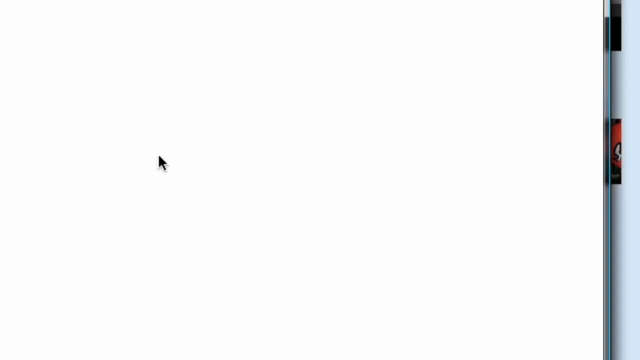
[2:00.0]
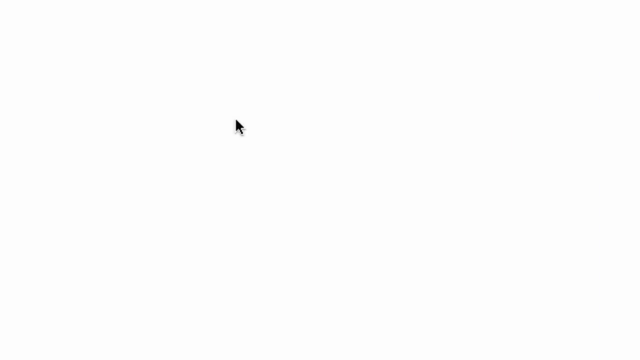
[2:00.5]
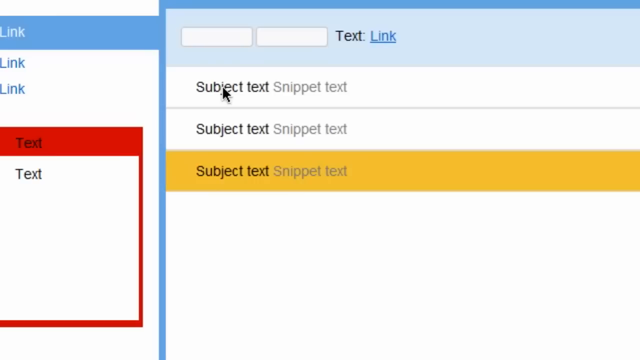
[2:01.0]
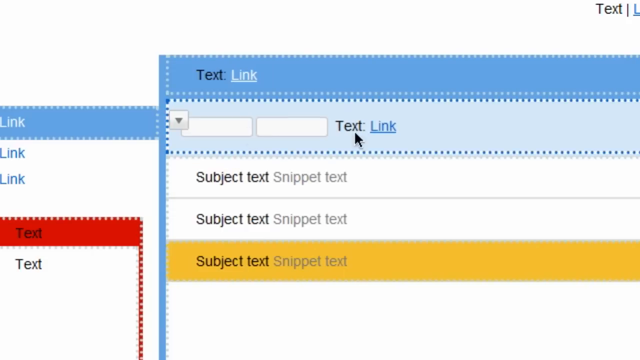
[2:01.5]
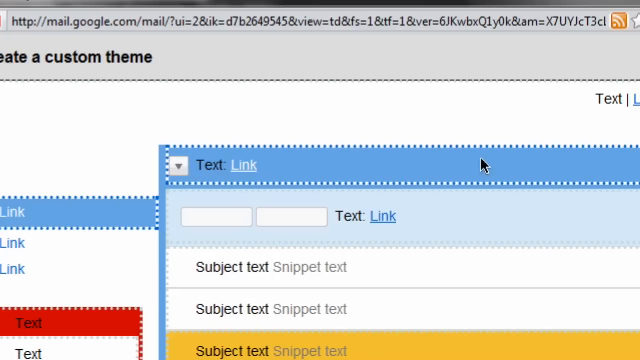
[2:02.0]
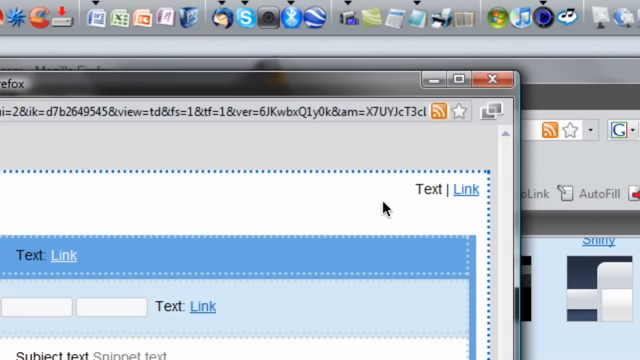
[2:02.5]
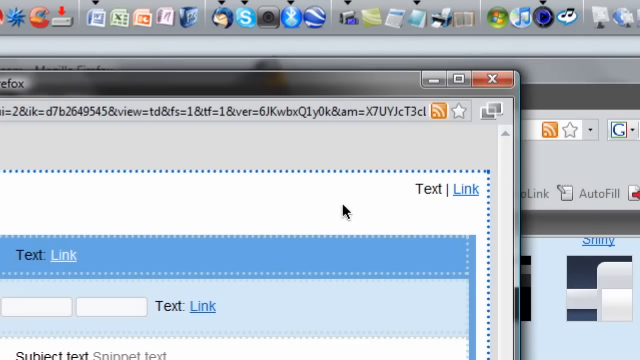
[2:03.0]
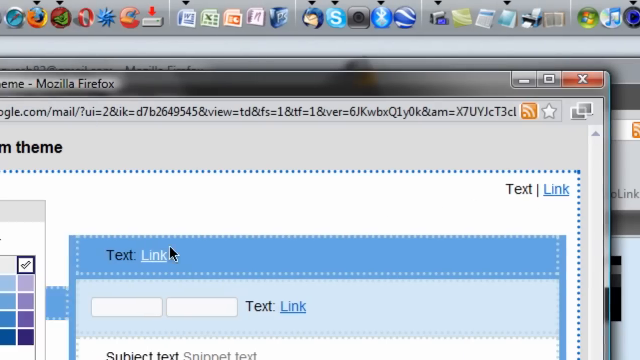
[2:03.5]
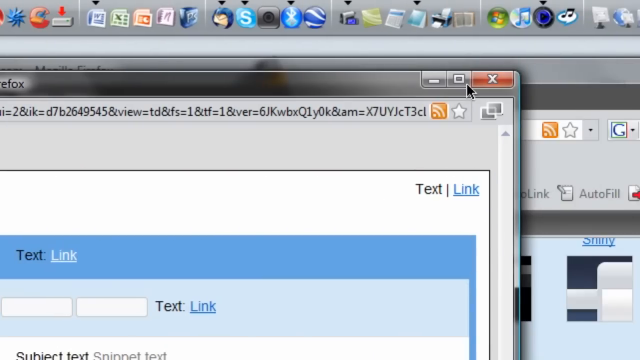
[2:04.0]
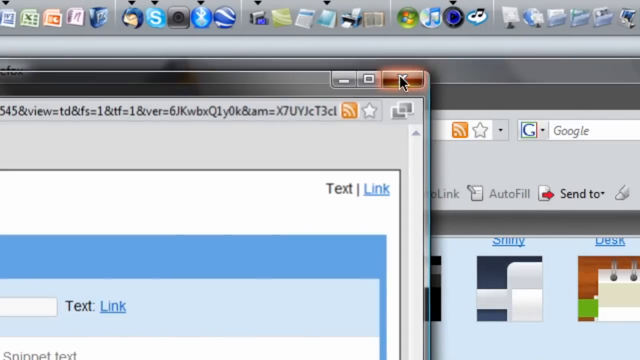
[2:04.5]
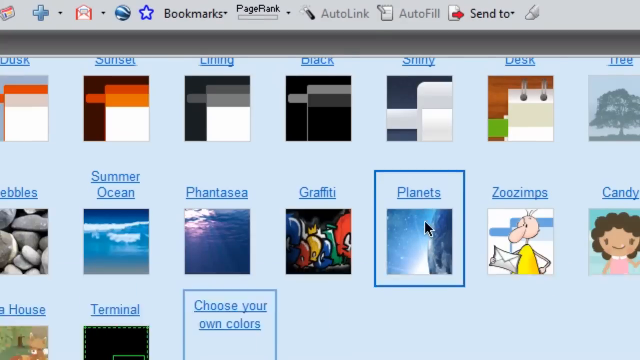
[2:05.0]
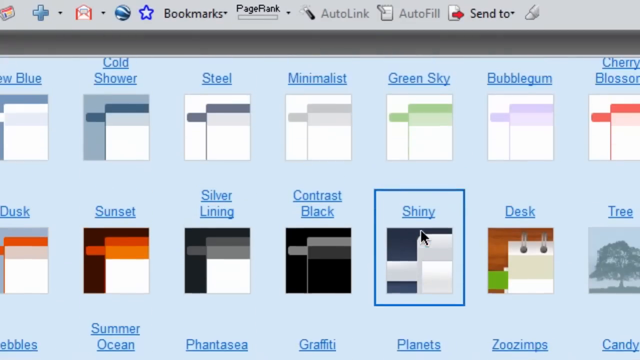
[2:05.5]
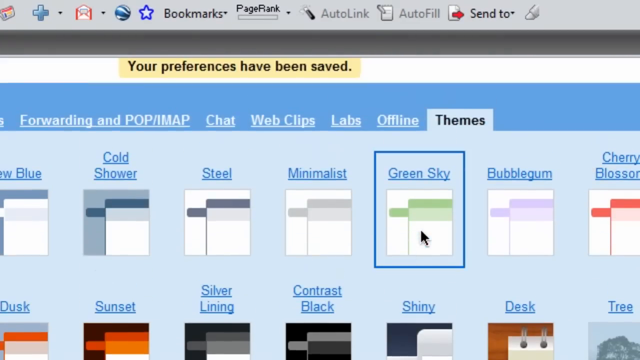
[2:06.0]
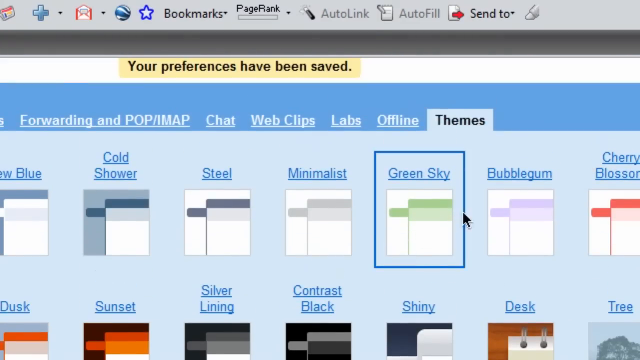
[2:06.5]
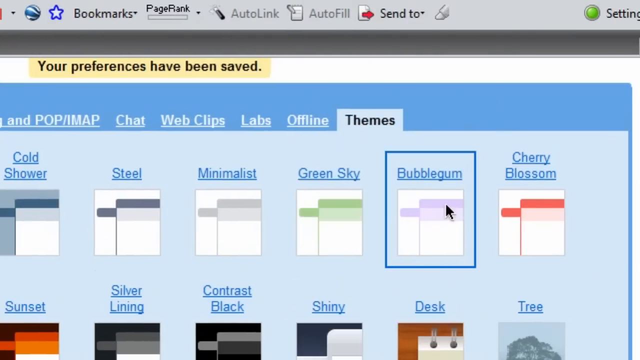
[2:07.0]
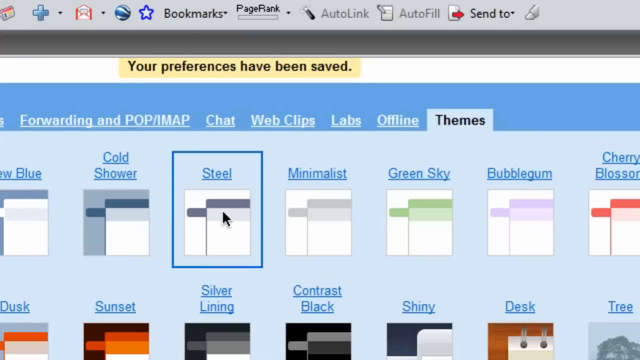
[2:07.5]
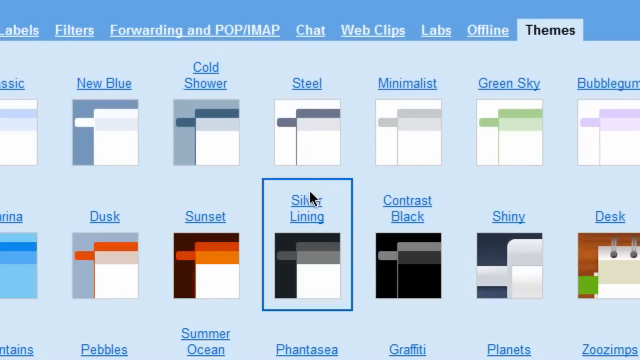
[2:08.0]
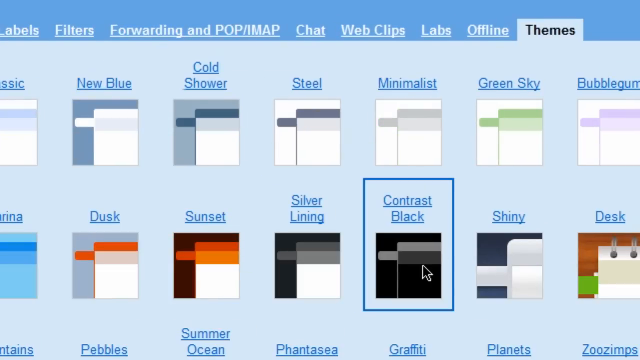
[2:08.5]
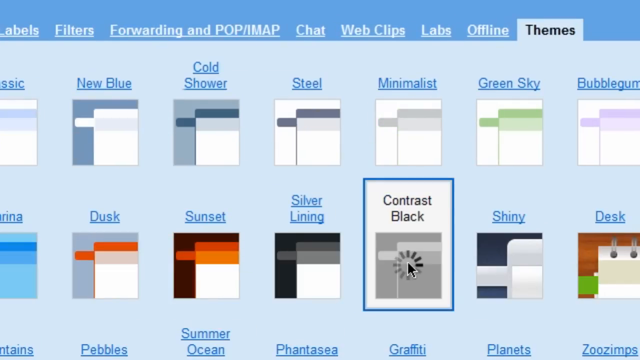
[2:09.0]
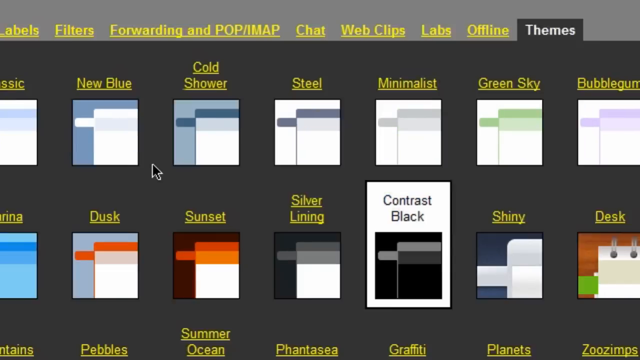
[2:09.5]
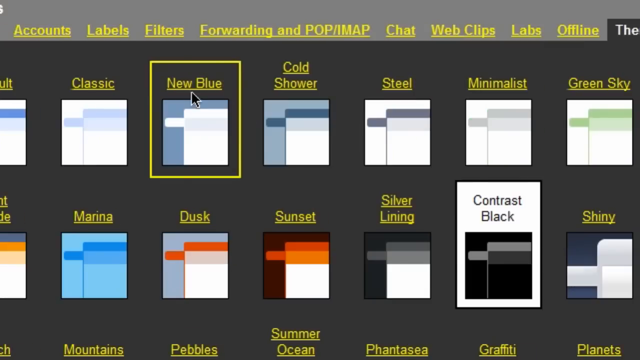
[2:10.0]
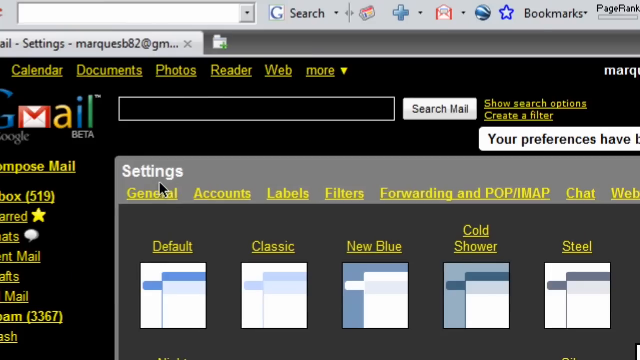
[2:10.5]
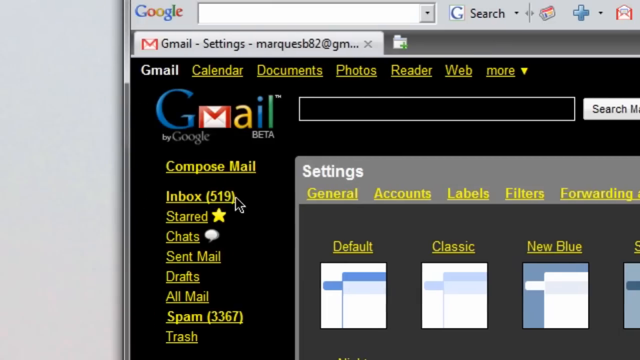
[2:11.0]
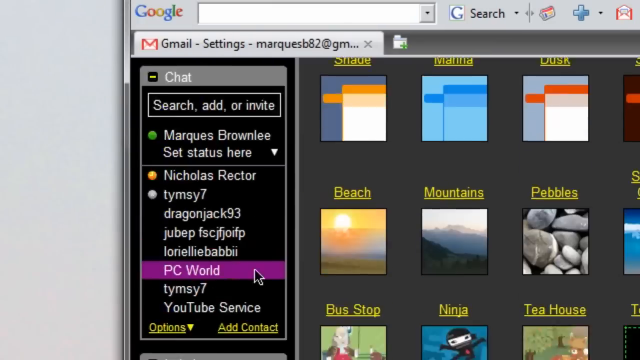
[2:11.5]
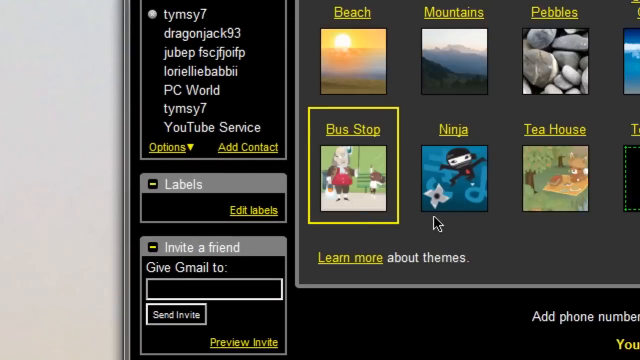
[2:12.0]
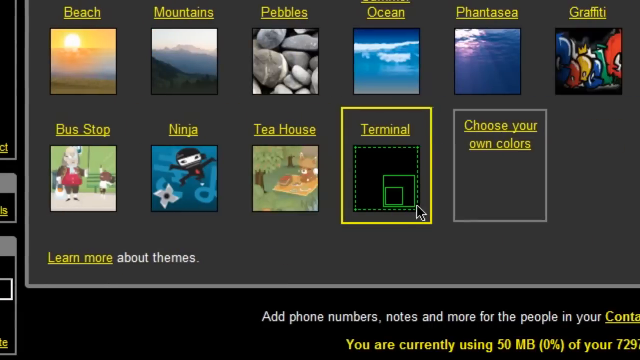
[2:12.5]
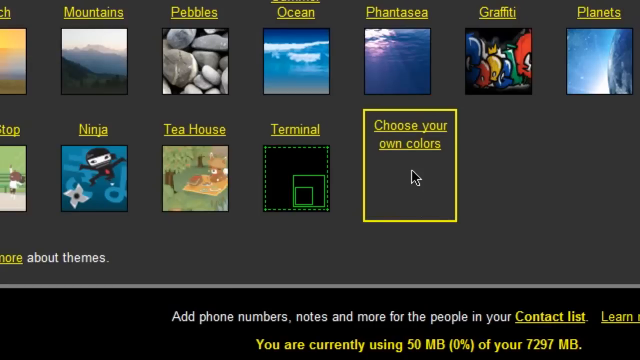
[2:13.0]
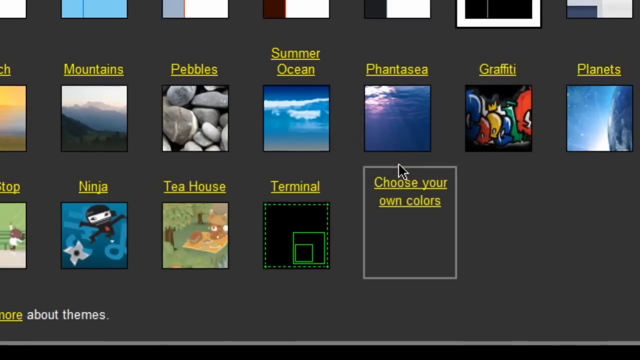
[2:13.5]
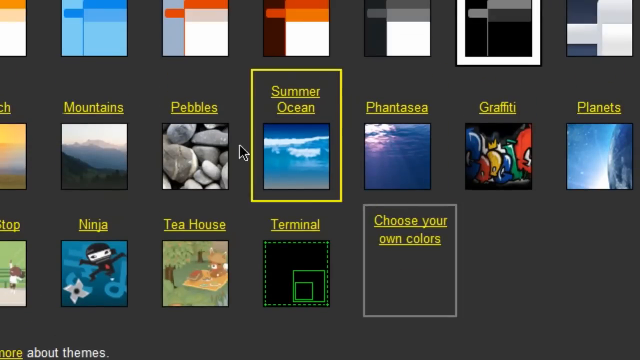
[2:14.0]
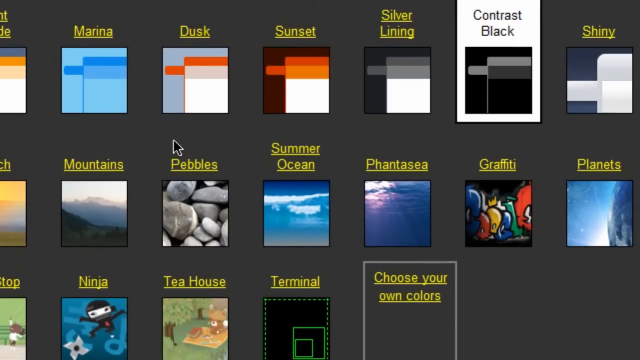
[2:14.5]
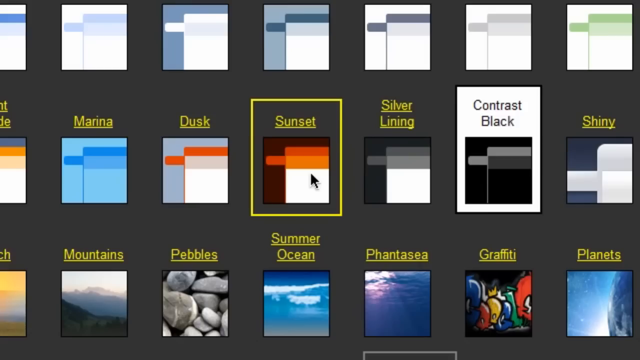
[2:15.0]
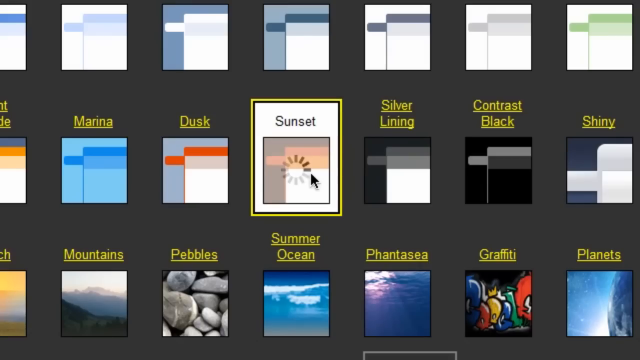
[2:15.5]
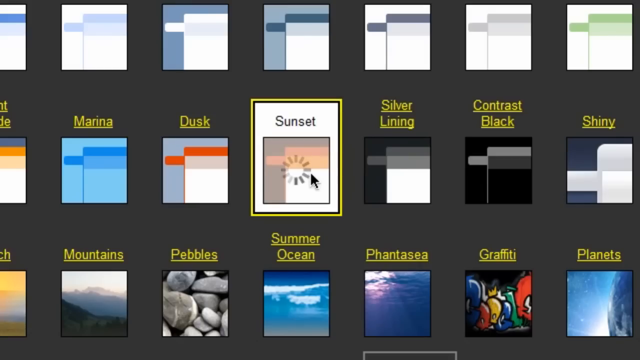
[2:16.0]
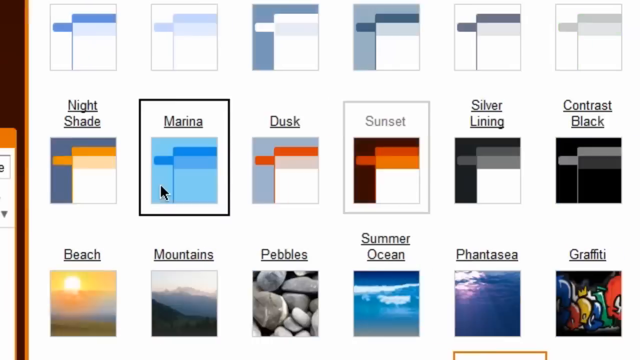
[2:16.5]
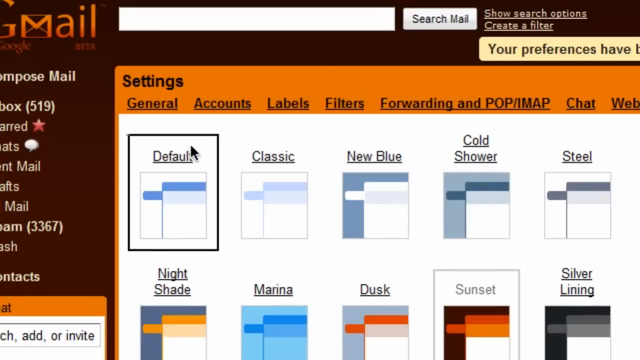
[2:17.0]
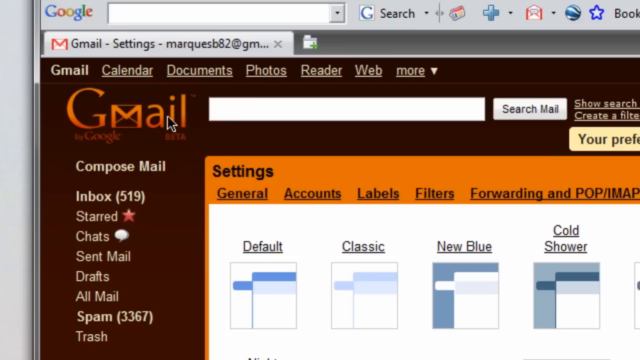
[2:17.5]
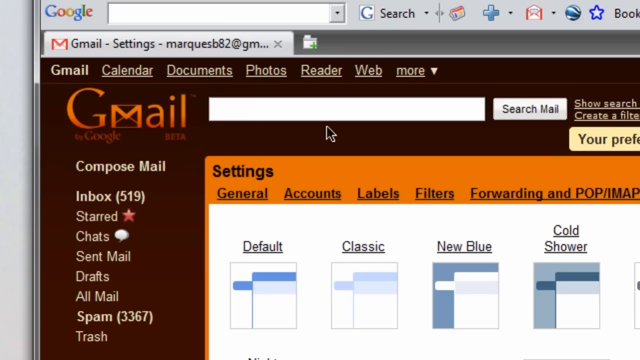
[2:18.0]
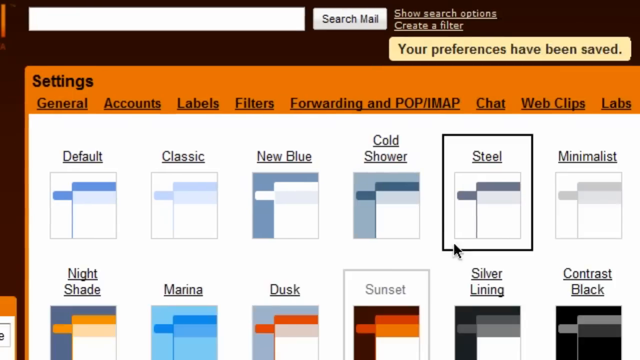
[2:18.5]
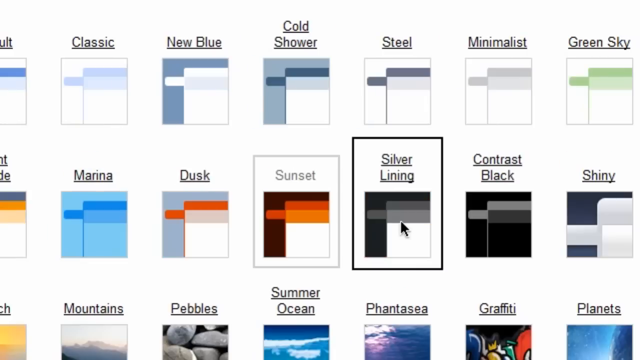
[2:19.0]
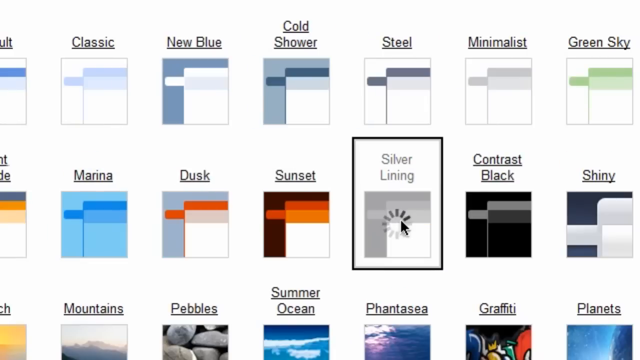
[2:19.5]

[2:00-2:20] A white screen with a black cursor hovering around it appears briefly before the select your own colors option pops up again. The cursor moves very quickly around the screen, clicks out of this option and shows more of the pre-made options. The user clicks on the contrast black option, and the background where the pebble picture was, as well as the background of the theme menu, turns black, with all the fonts turning yellow. The mouse moves quickly around again, and the cursor chooses sunset, which briefly turns the screen to a black, white and orange theme. Finally, the cursor hovers over silver lining, which appears to be a greyscale theme, and possibly selects it.